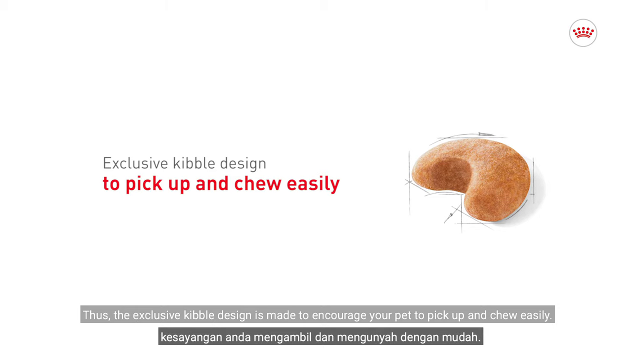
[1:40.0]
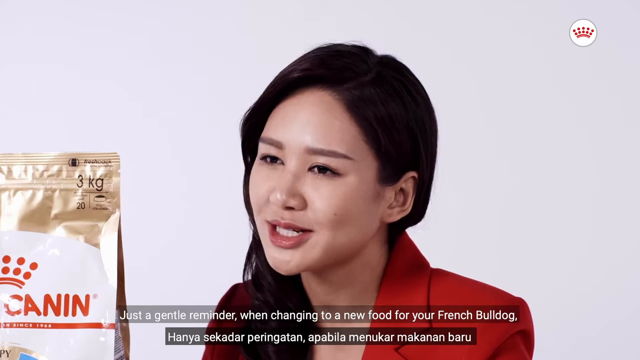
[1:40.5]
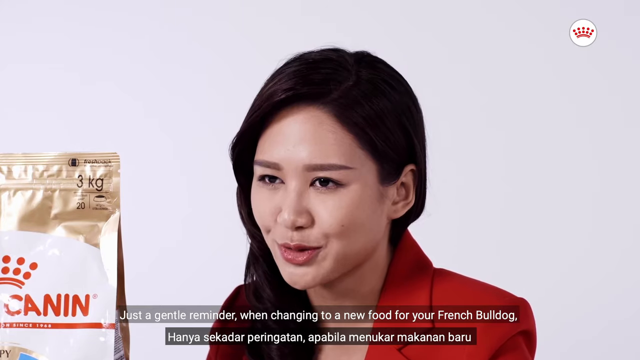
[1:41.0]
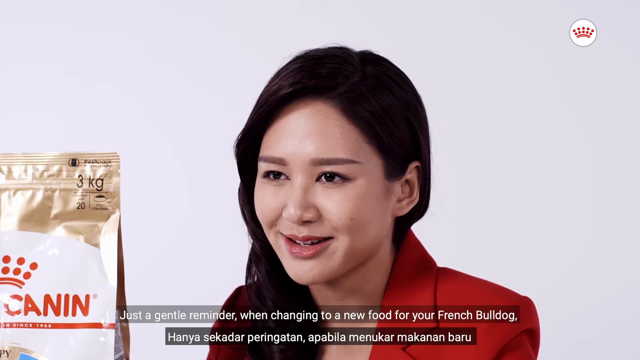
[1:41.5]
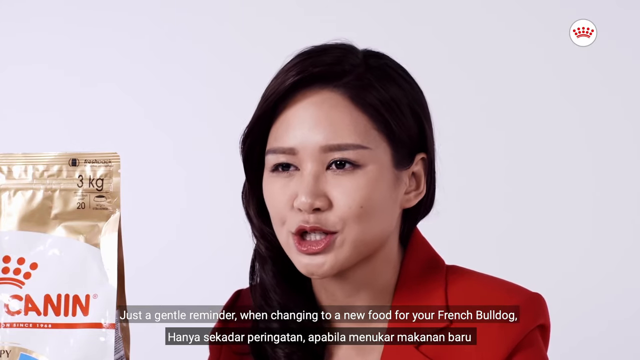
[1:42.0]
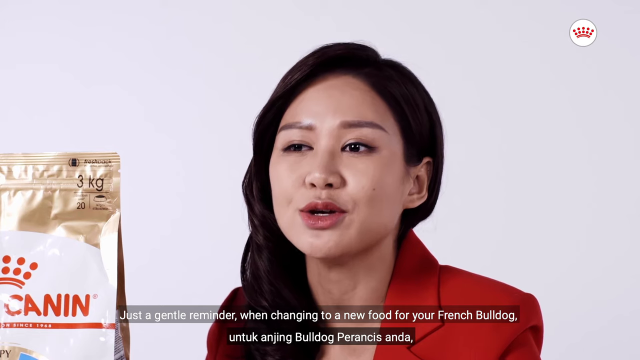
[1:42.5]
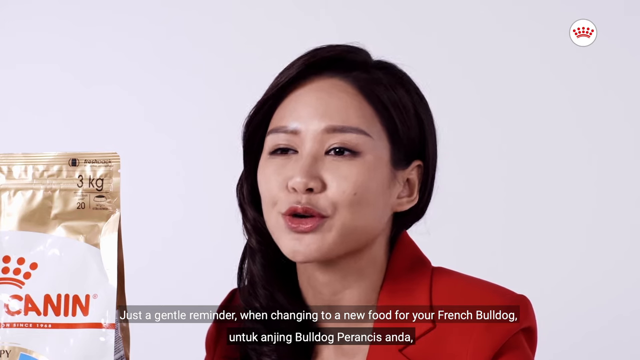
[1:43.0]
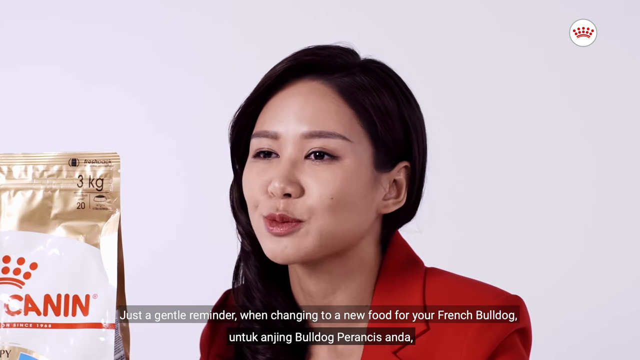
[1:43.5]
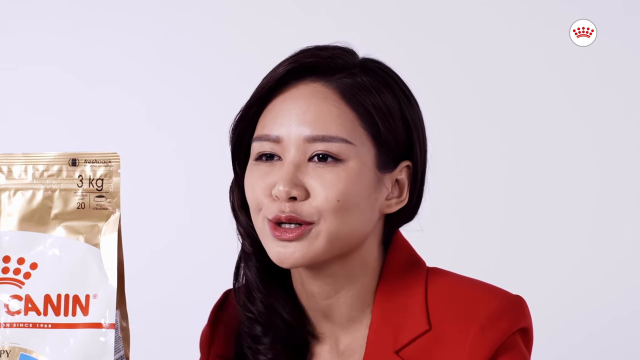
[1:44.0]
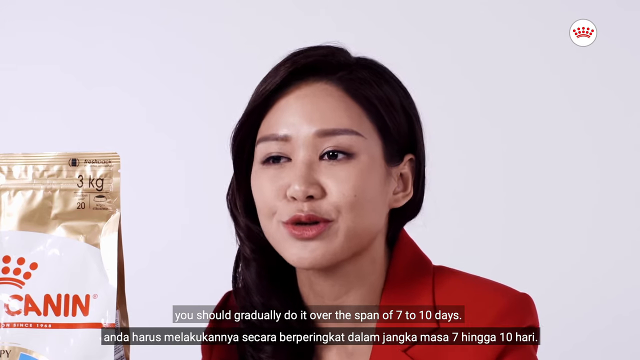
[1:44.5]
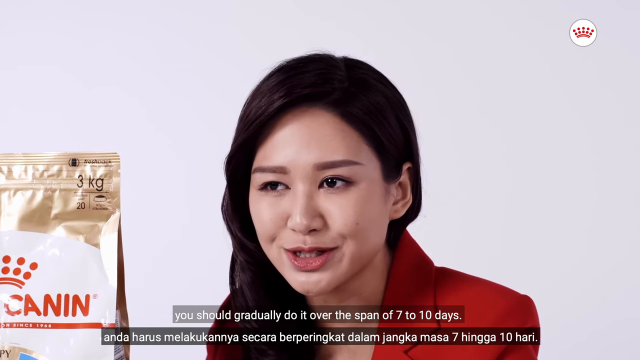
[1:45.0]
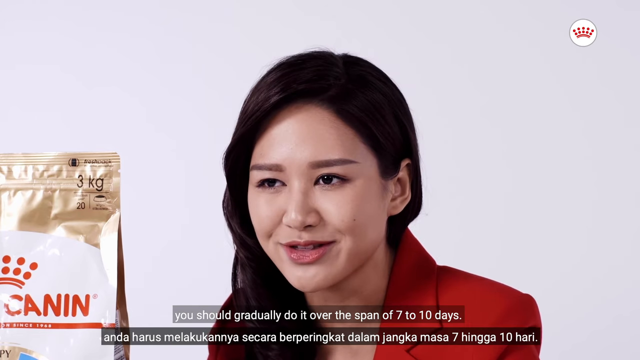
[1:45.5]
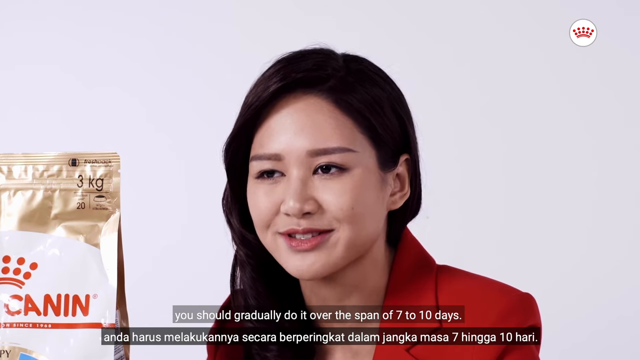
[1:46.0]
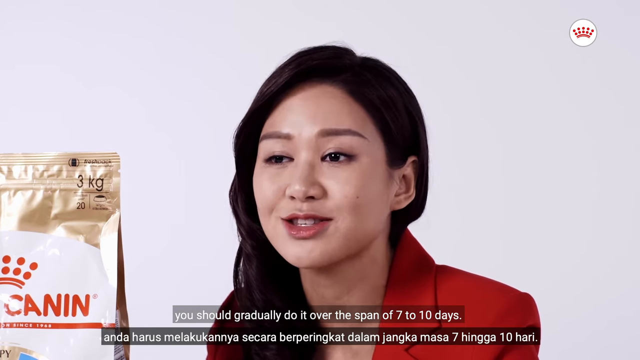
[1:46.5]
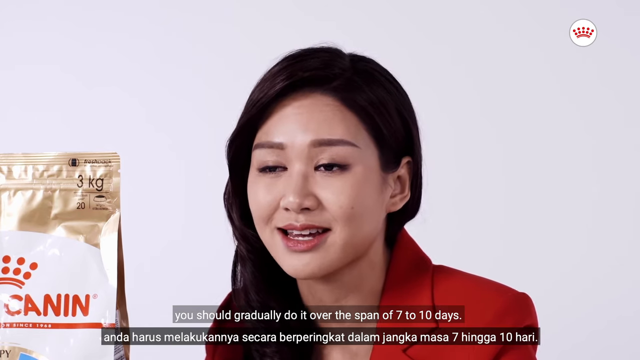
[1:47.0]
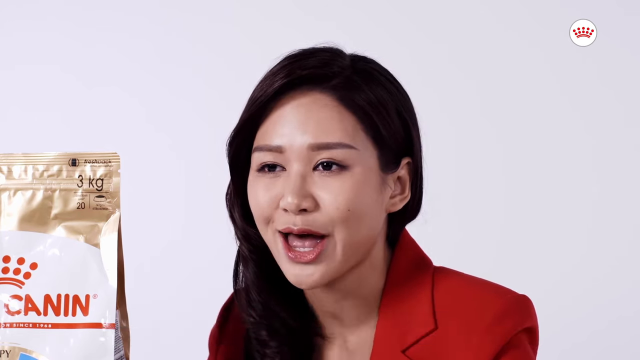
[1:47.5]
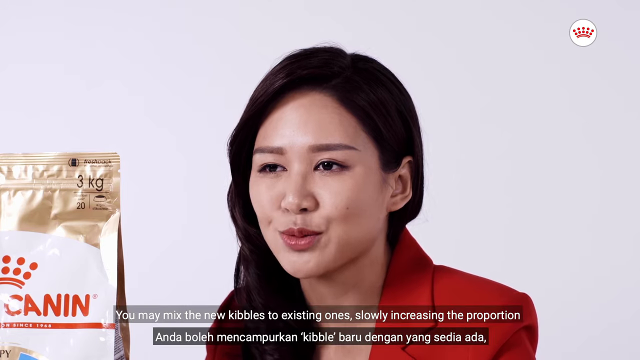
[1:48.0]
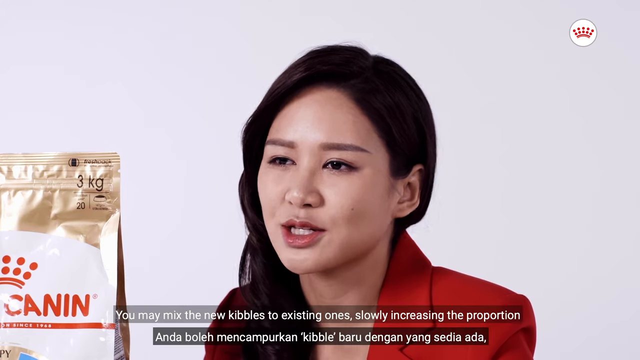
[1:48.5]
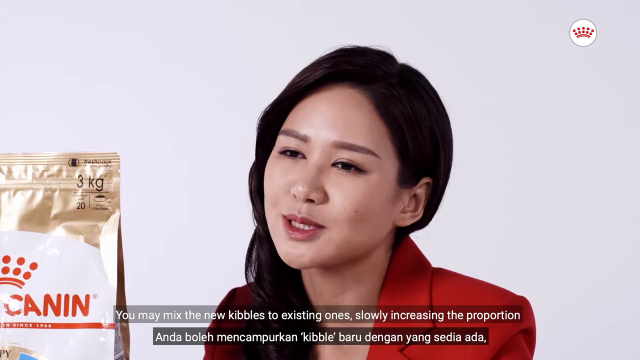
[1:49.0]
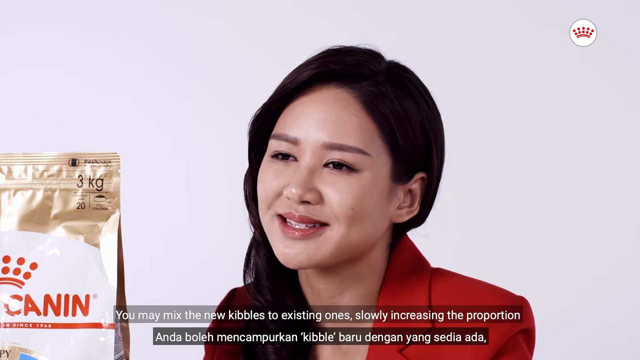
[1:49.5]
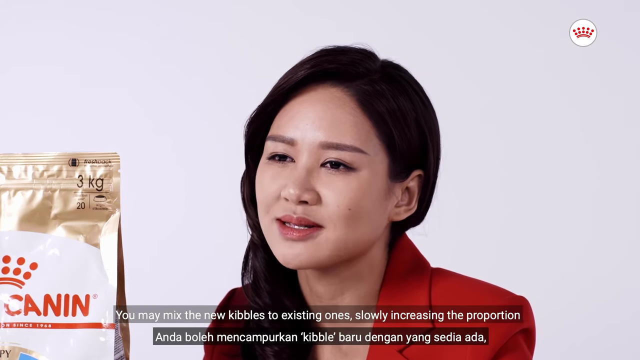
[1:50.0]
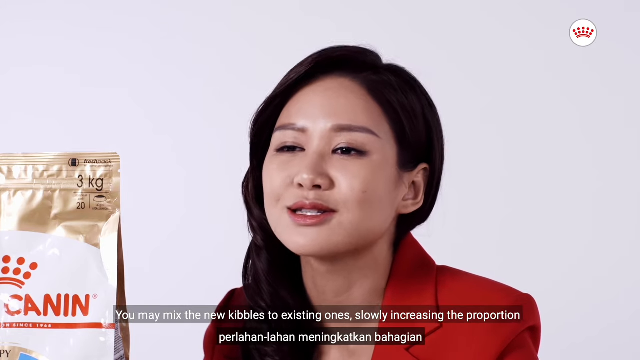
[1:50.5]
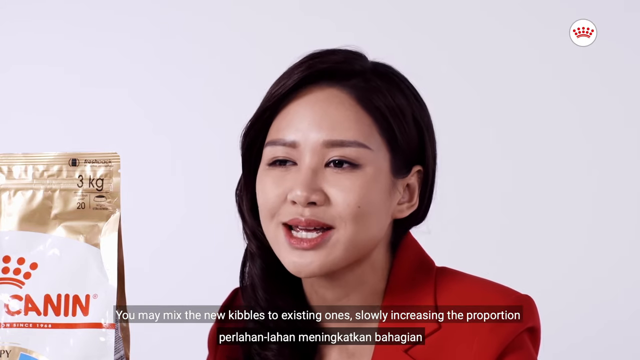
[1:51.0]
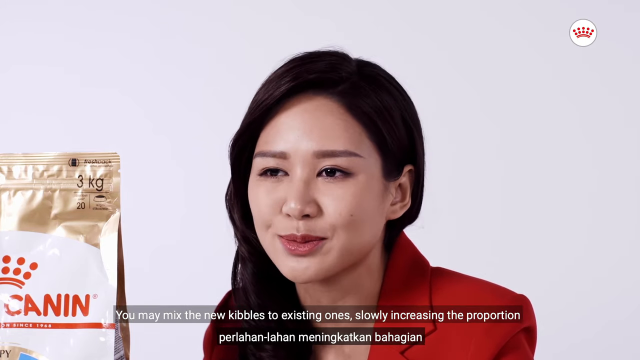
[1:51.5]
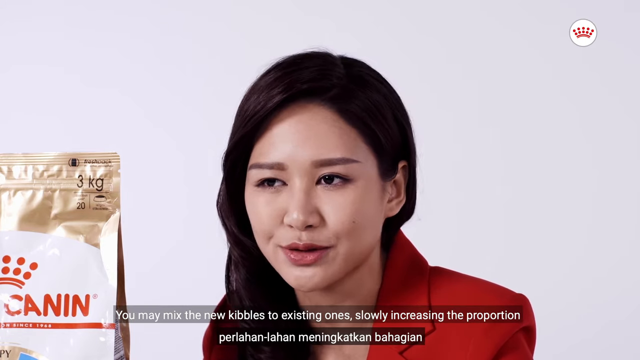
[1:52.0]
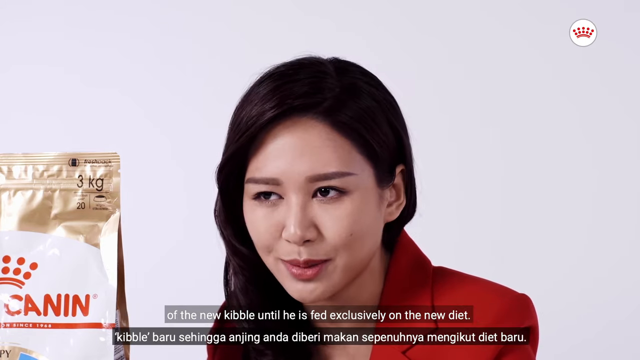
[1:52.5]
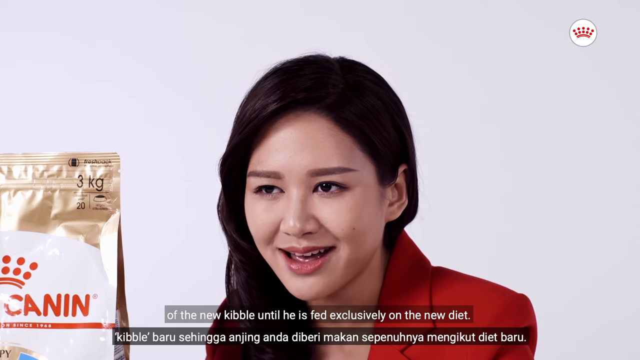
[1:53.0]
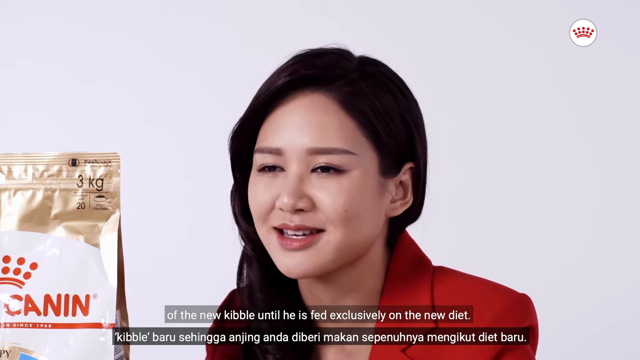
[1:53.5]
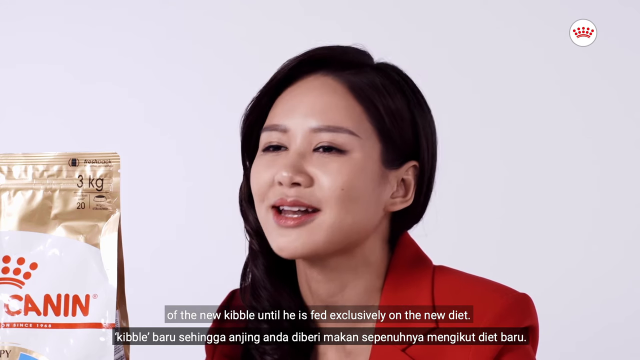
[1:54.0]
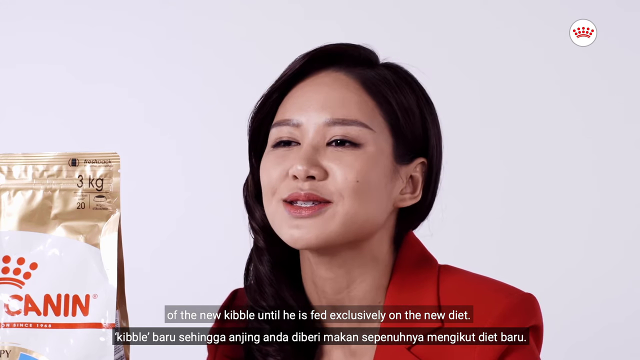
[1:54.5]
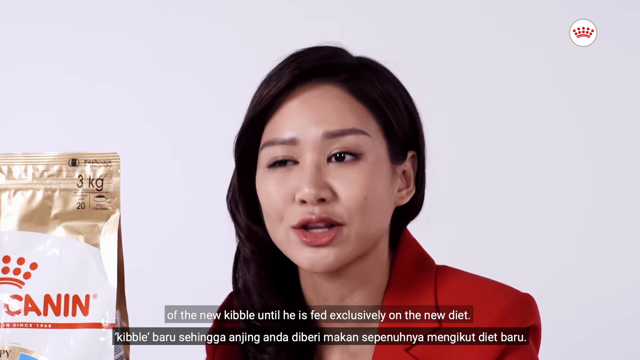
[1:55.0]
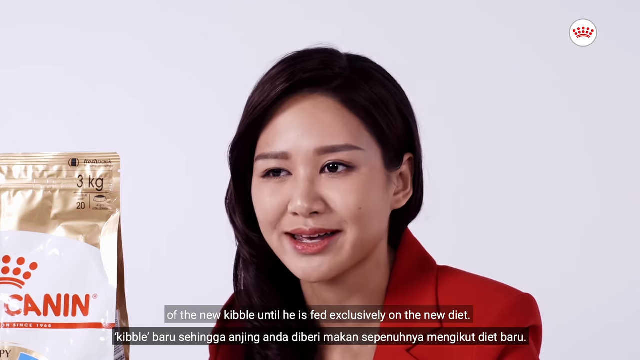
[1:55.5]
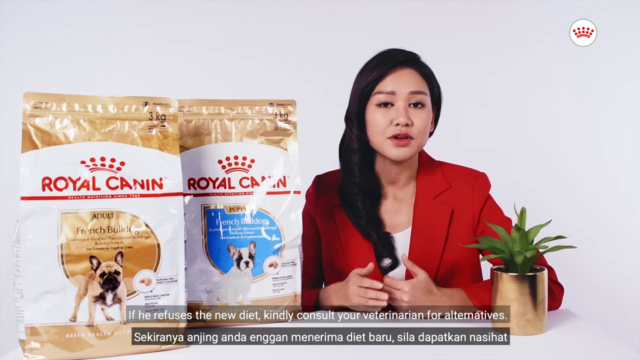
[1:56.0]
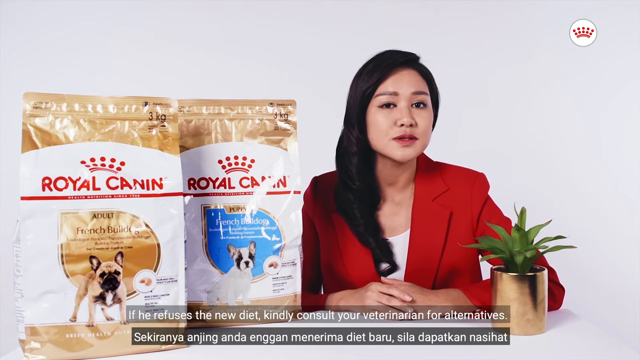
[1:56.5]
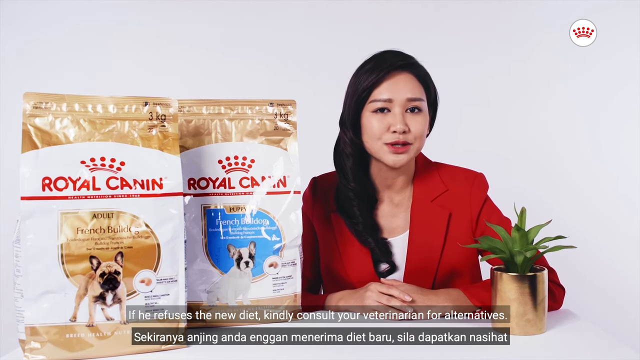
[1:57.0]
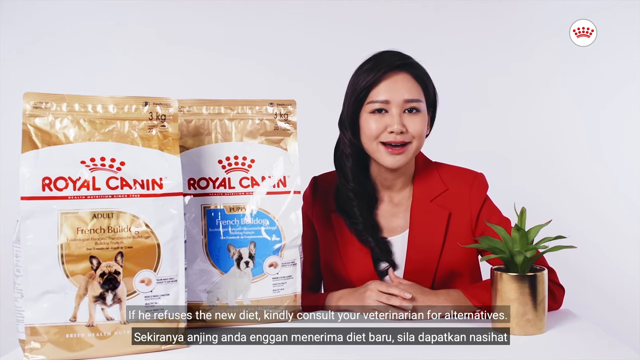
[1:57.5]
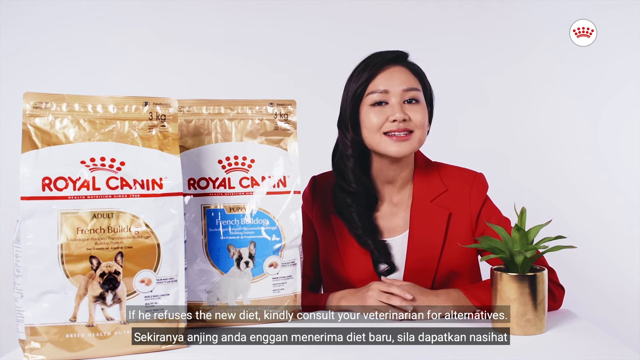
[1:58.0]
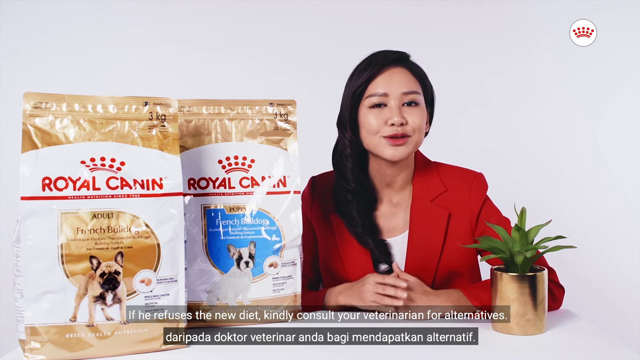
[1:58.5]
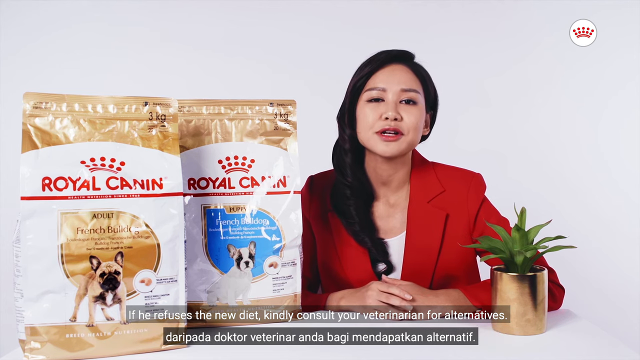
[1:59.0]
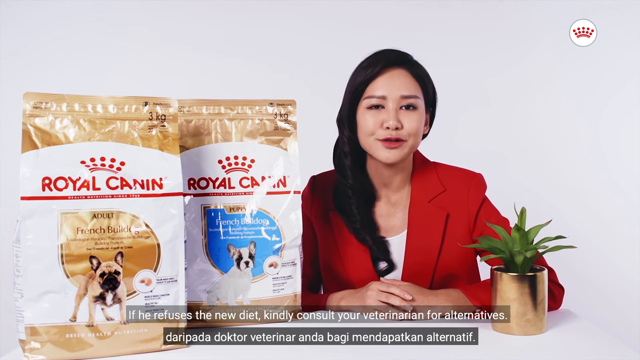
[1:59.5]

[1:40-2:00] Text on the left of the screen says "This is an exclusive kibble design to pick up and chew easily", and to the right is a picture of a piece of kibble in a horseshoe or curved shape. The Asian woman is again talking to the camera. The scene then switches and kind of zooms out, showing her from the chest up, resting her hands on a table. To the left, in front of her forearm, is a green potted plant in a gold vase, and to her right are two bags of Royal Canin dog food that come up to about her eye level.